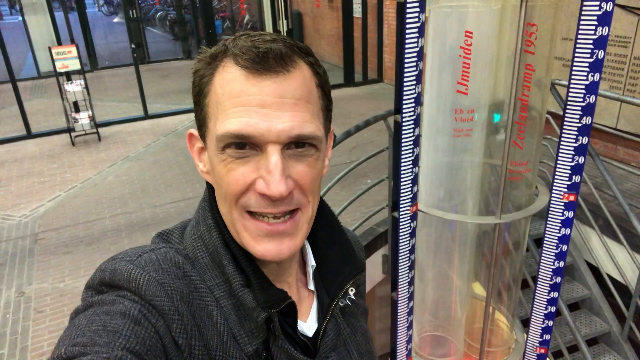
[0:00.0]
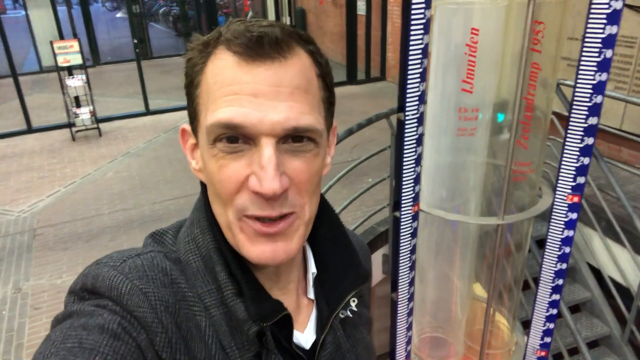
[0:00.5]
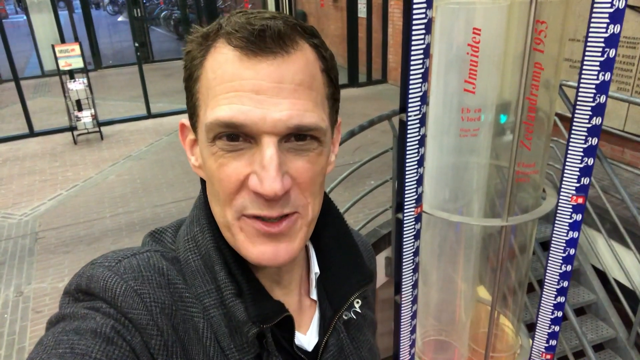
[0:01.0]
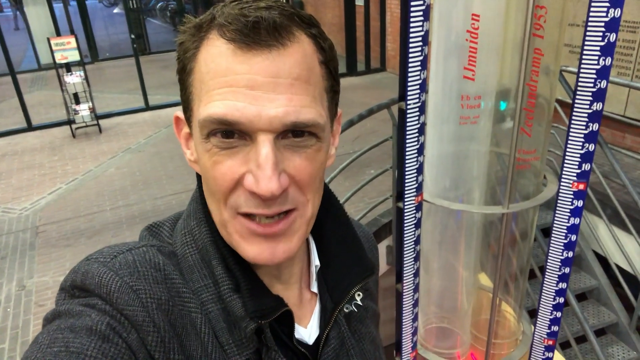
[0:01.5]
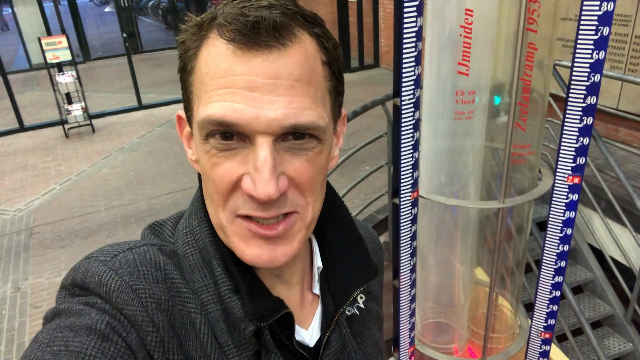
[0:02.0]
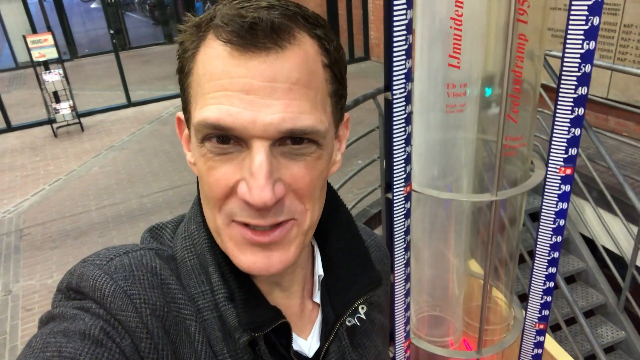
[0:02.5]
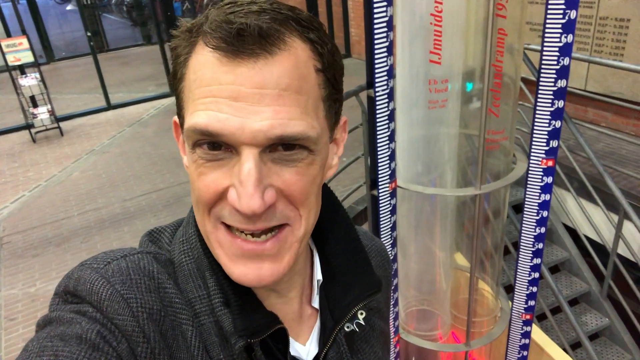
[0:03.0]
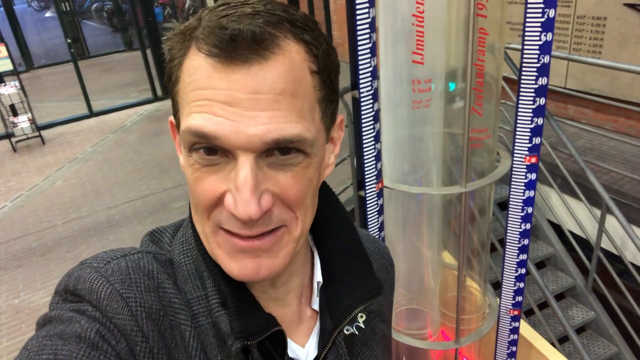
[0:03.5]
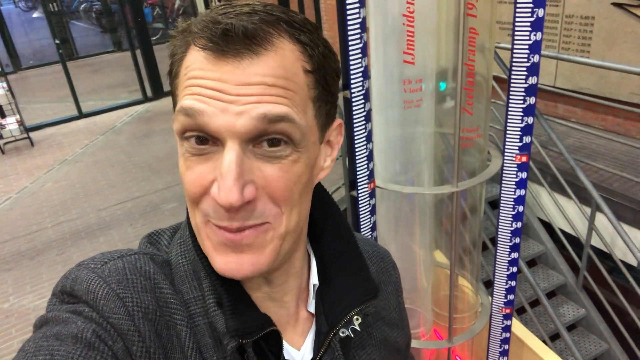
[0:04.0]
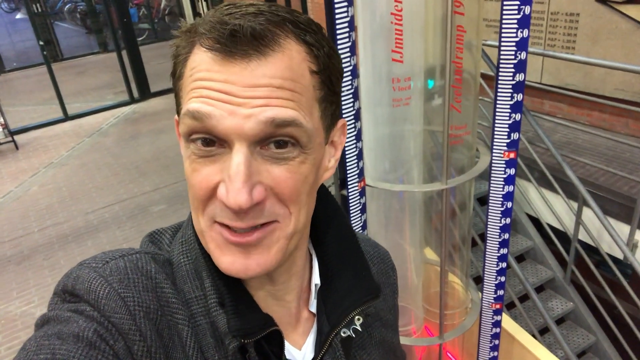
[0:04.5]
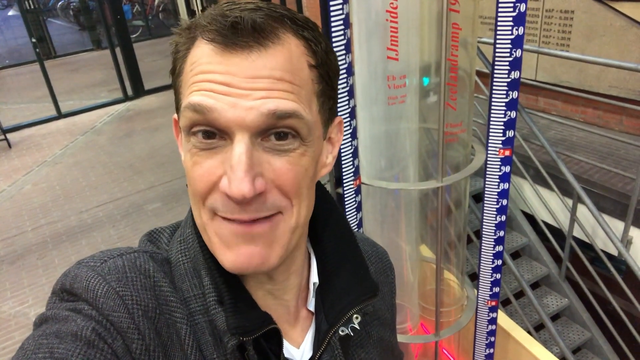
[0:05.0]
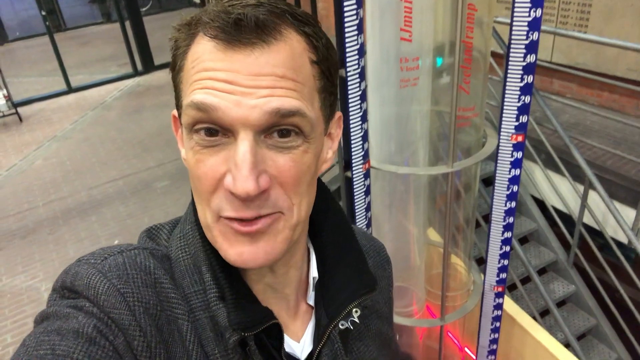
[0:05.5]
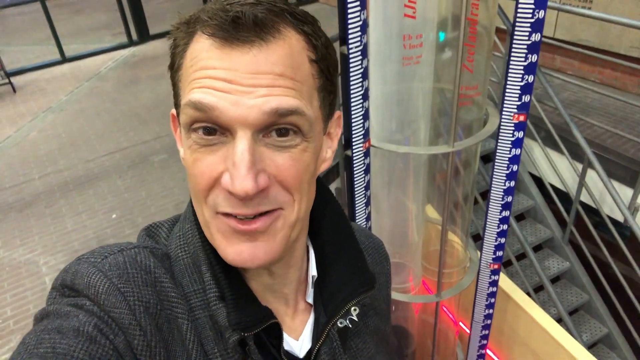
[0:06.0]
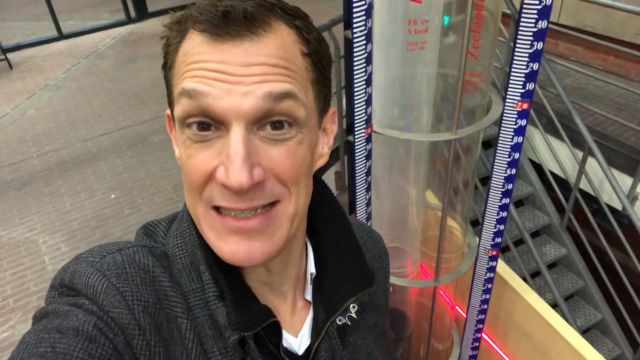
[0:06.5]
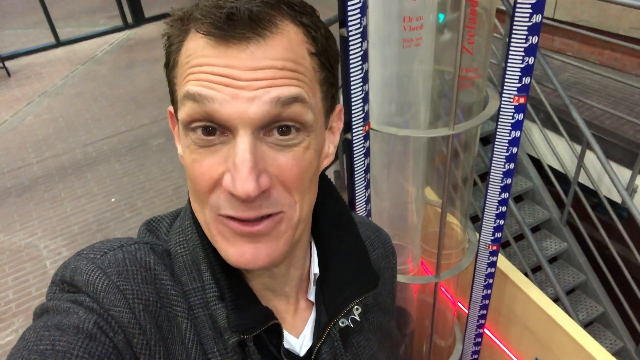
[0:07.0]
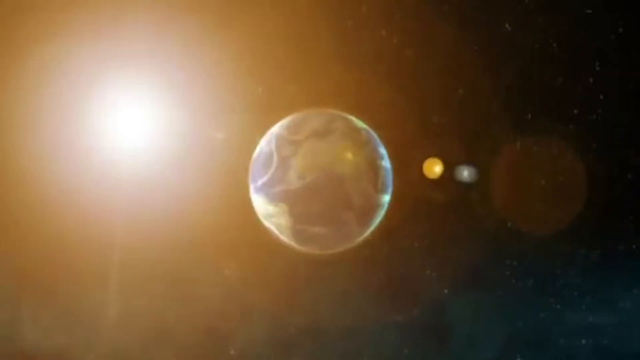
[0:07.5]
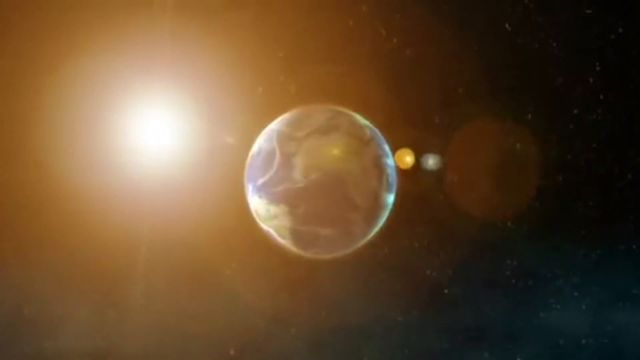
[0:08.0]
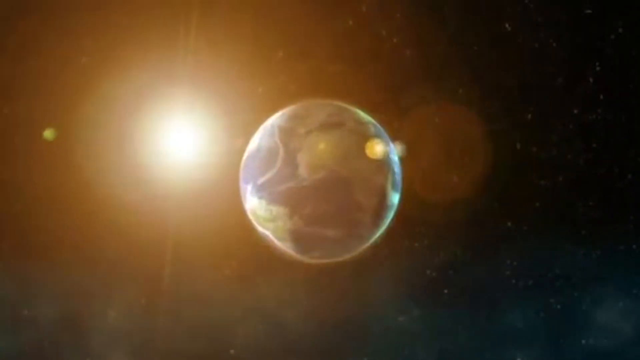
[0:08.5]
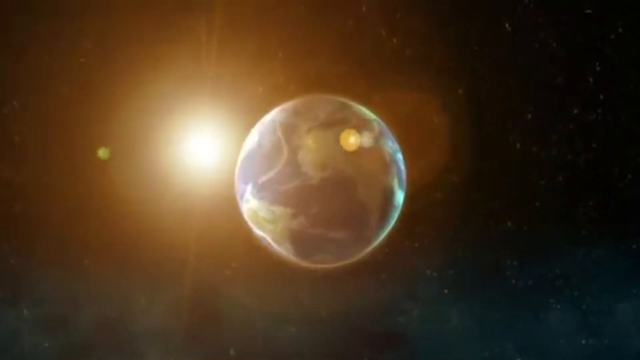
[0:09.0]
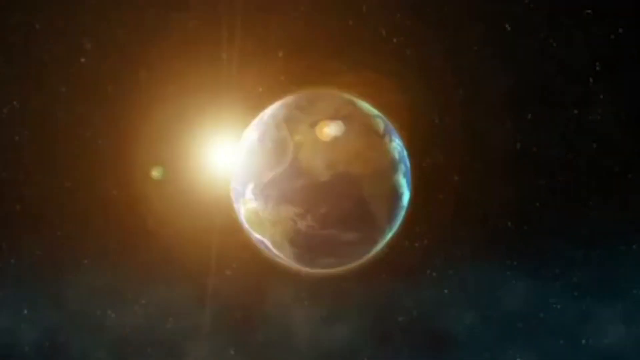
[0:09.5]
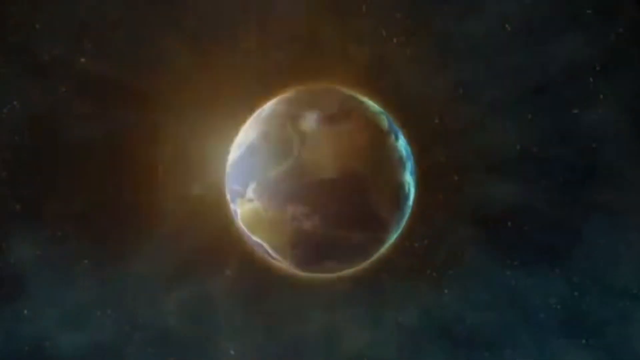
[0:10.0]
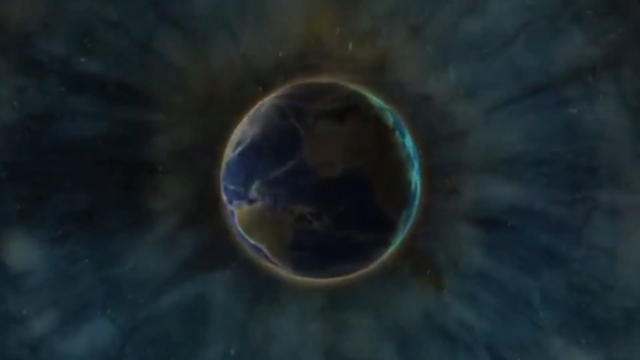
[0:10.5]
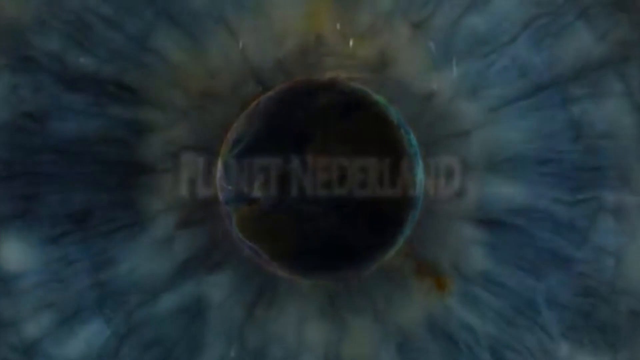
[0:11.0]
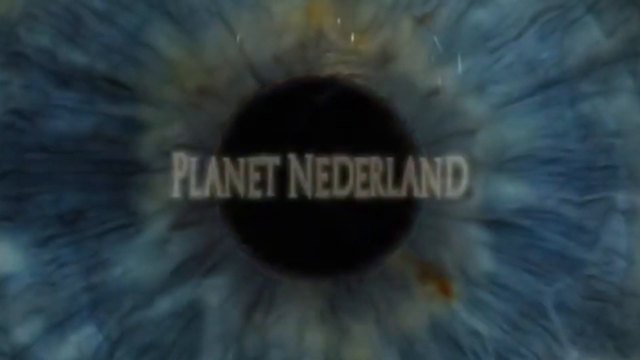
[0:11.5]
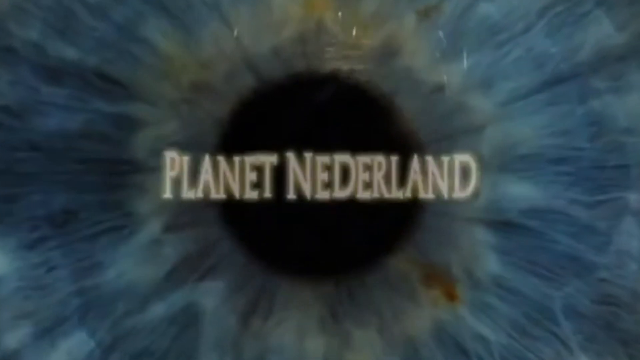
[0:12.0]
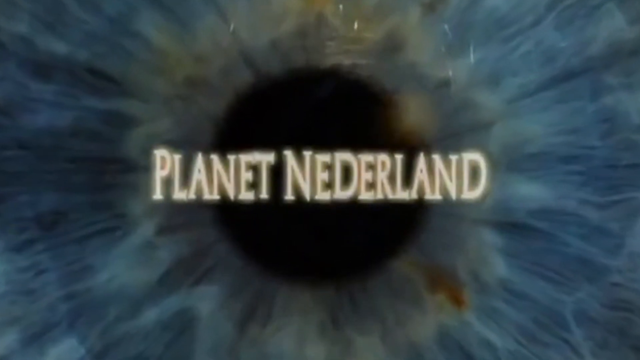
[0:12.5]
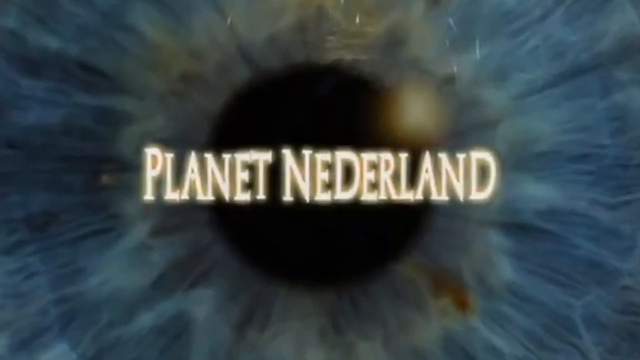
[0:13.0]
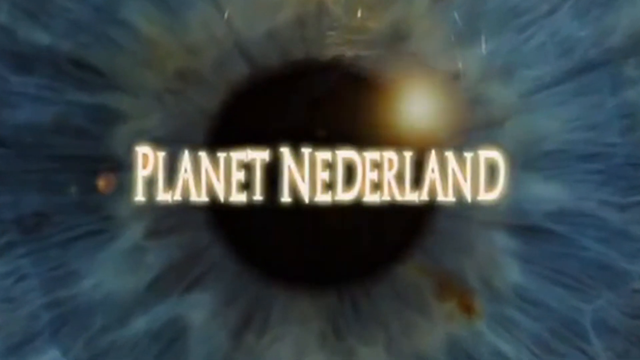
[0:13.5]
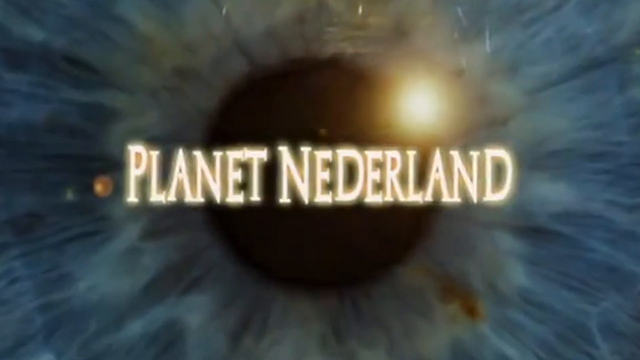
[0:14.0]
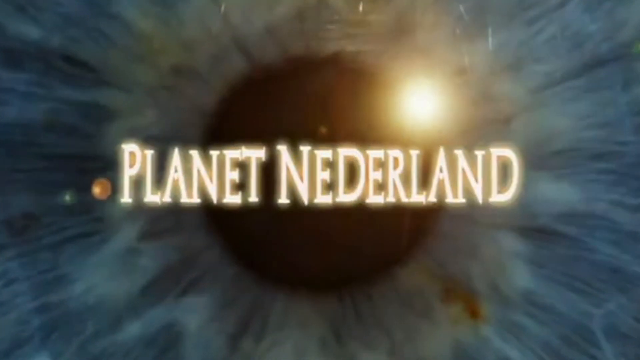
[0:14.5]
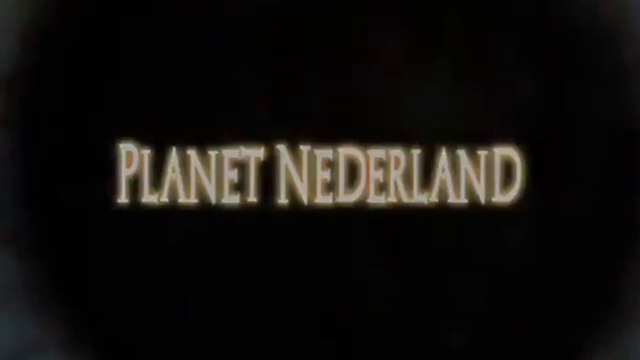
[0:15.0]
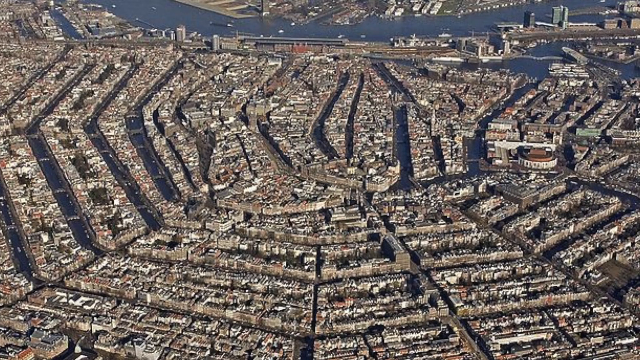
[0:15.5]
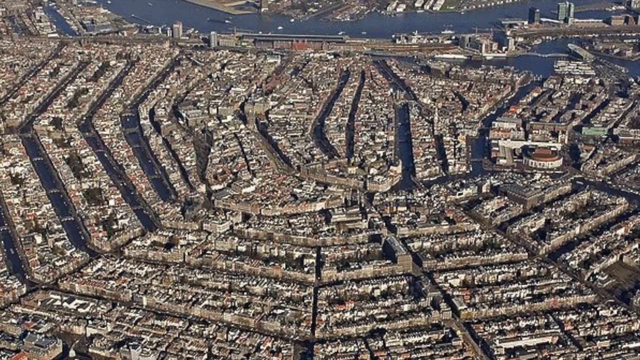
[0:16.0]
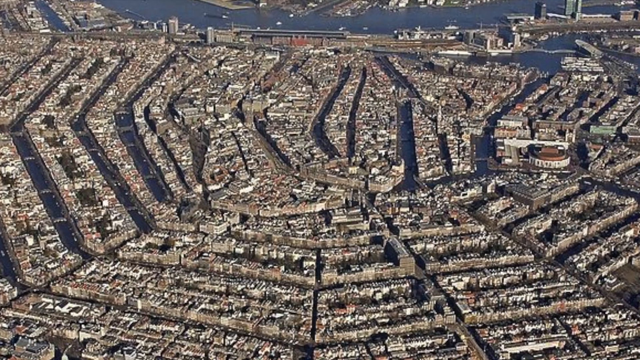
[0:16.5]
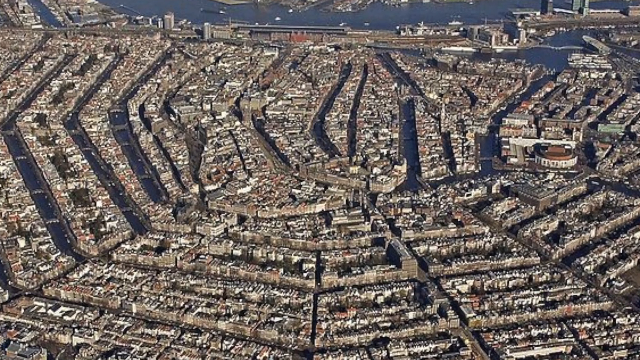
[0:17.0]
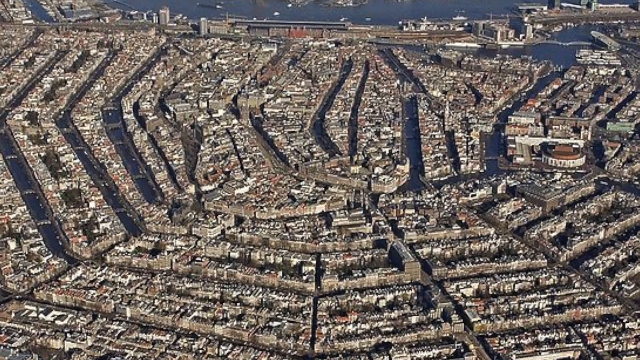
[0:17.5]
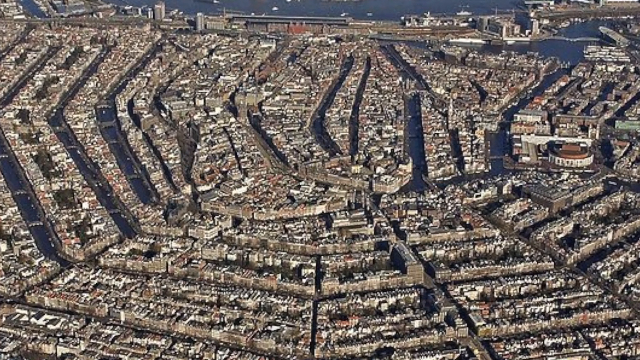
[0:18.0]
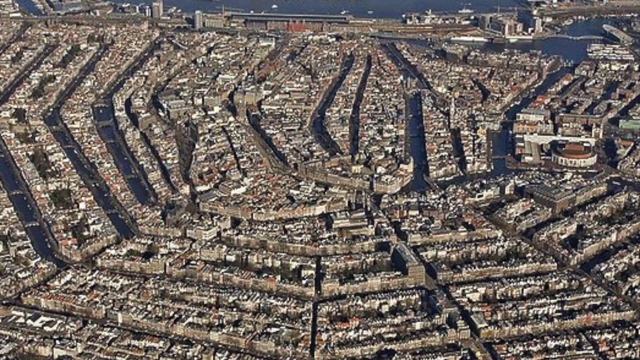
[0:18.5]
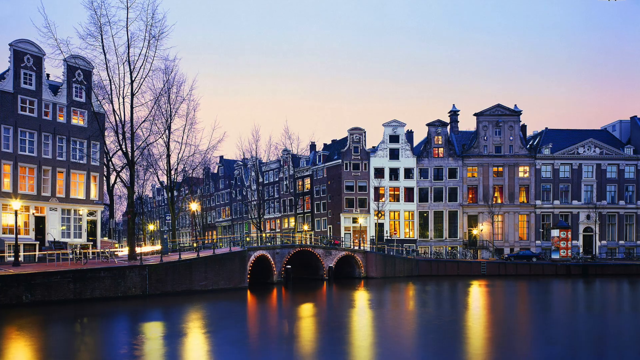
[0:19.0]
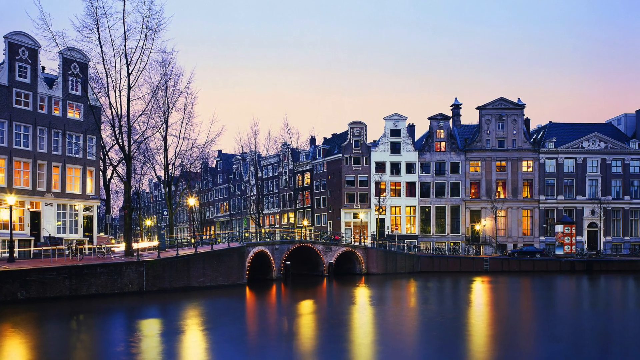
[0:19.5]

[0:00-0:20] A man in his late 40s with dark hair and quite a long face, who looks like he is holding the camera, talks to the front-facing camera, panning slightly as he films. He is standing by an entranceway with glass doors behind him, next to some kind of cylindrical measuring device, holding the camera up at a high angle and speaking into it. The scene changes to what looks like the Earth seen from space. As it zooms in, this turns into an eye's iris and pupil, with the words "planet Netherlands" in light font in the middle. This pans out to a zoomed-out image of what looks like a city with lots of streets and buildings, potentially houses. The view then zooms in on a bridge over a river.